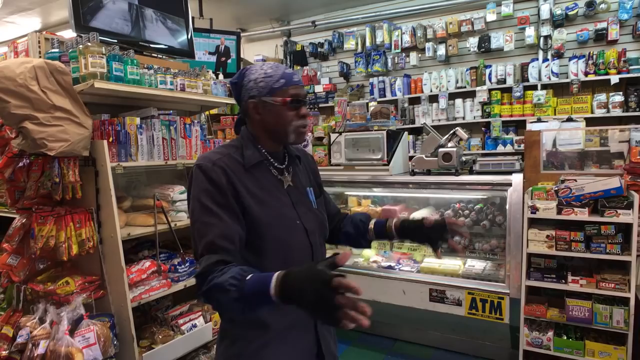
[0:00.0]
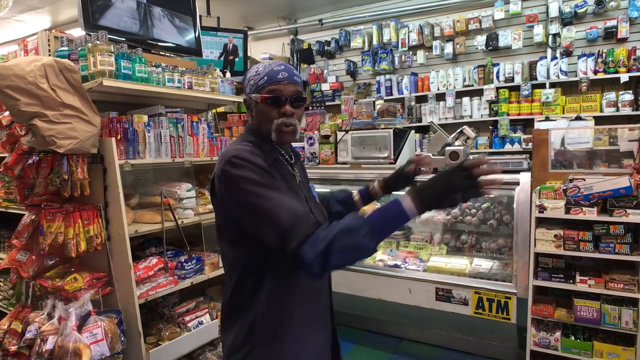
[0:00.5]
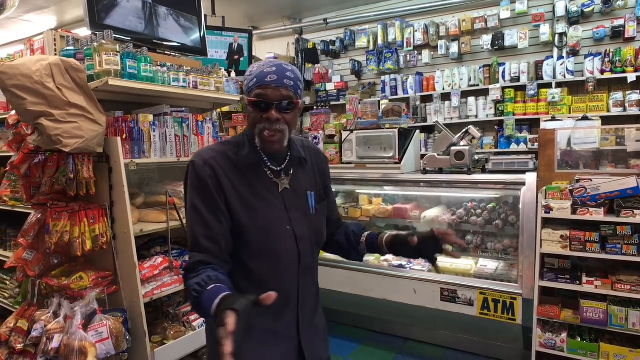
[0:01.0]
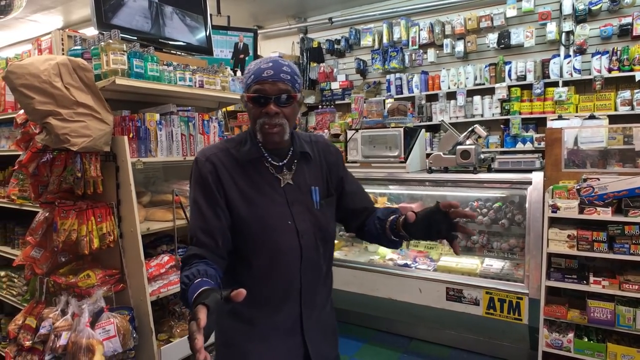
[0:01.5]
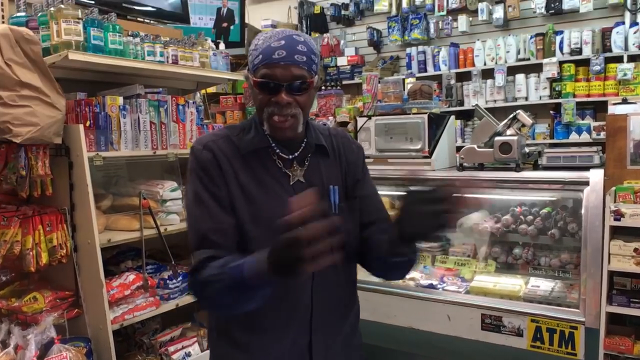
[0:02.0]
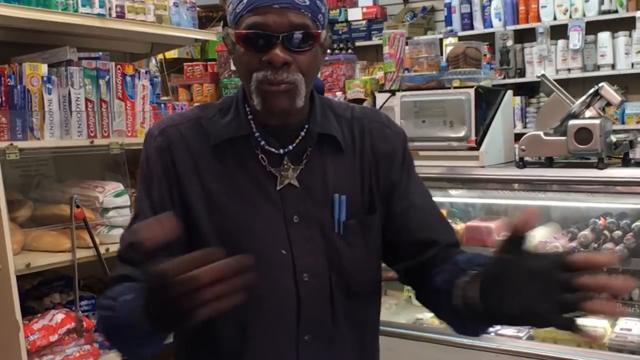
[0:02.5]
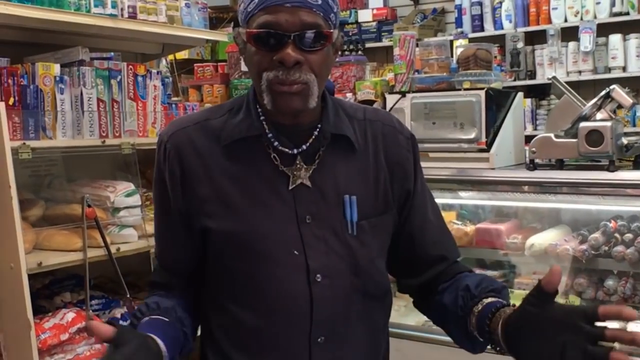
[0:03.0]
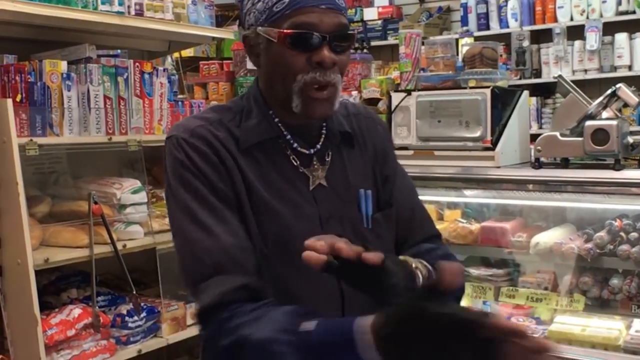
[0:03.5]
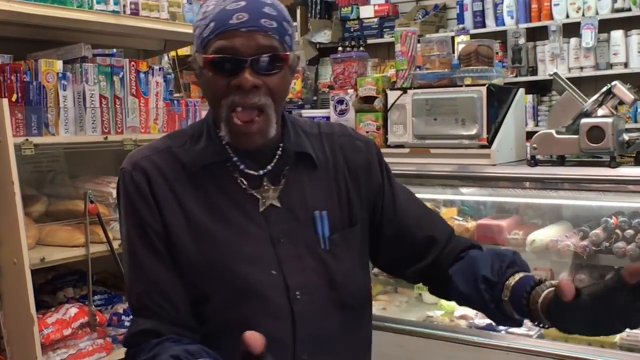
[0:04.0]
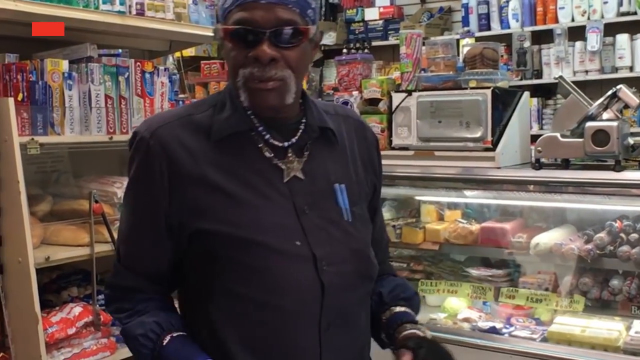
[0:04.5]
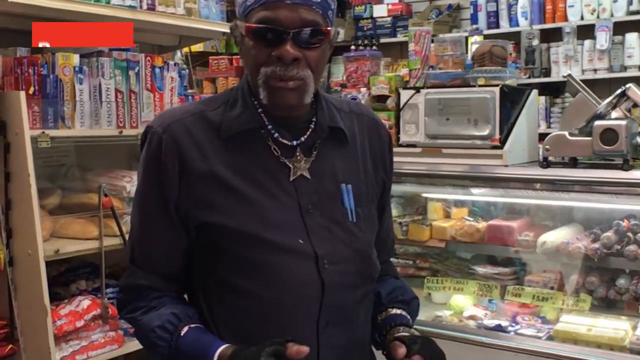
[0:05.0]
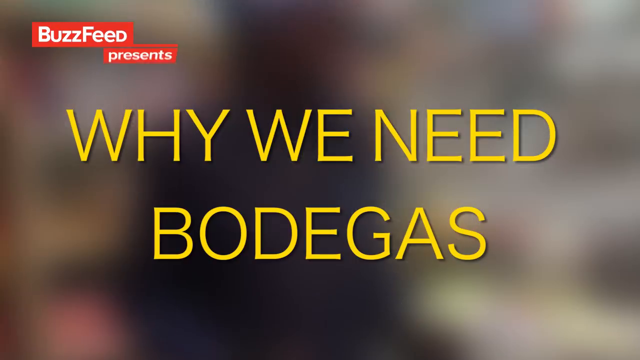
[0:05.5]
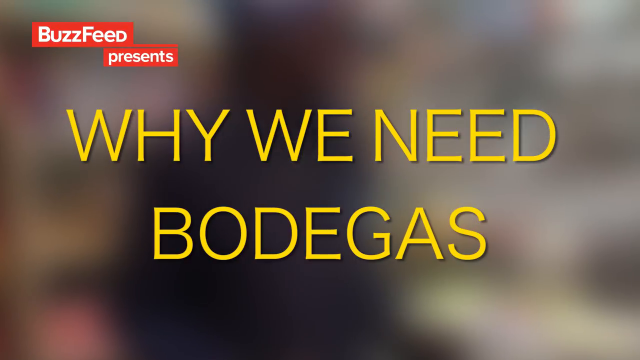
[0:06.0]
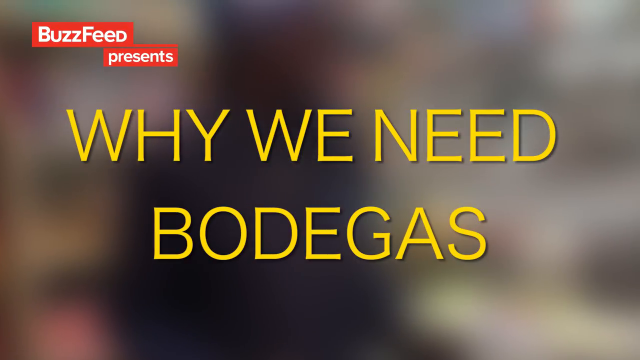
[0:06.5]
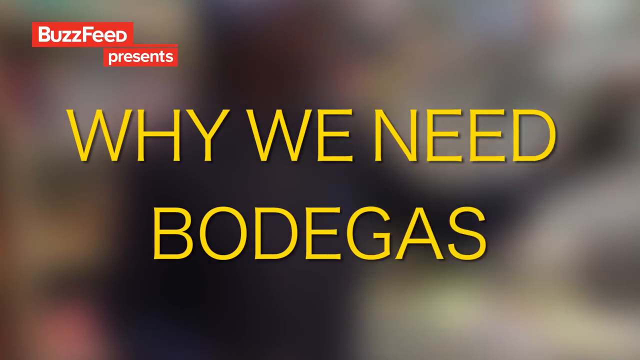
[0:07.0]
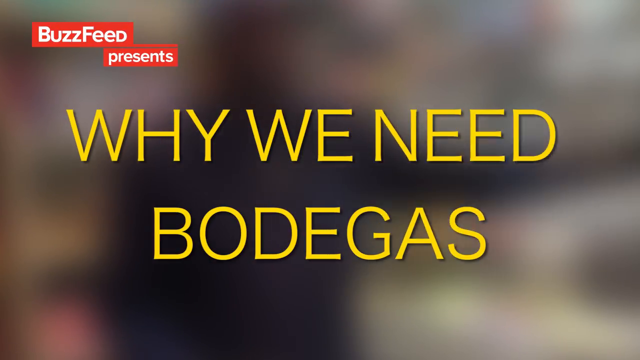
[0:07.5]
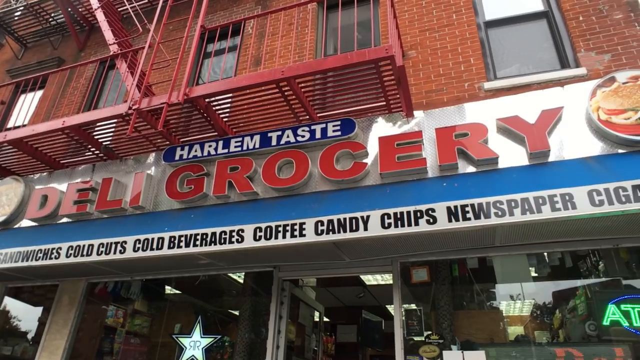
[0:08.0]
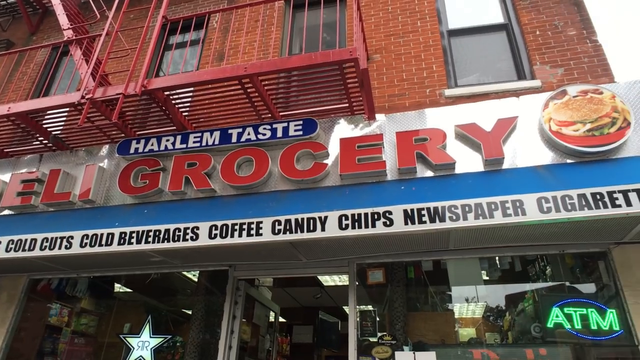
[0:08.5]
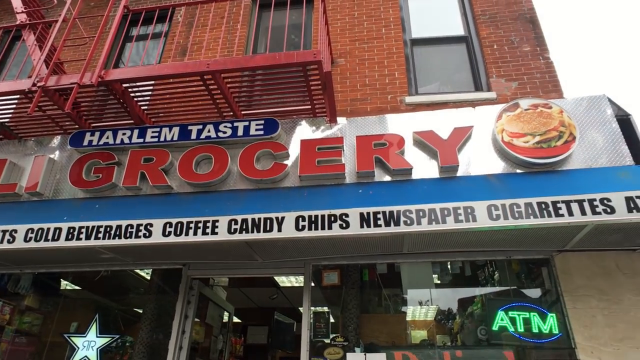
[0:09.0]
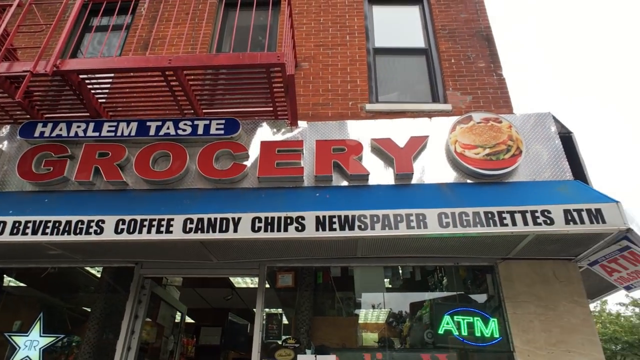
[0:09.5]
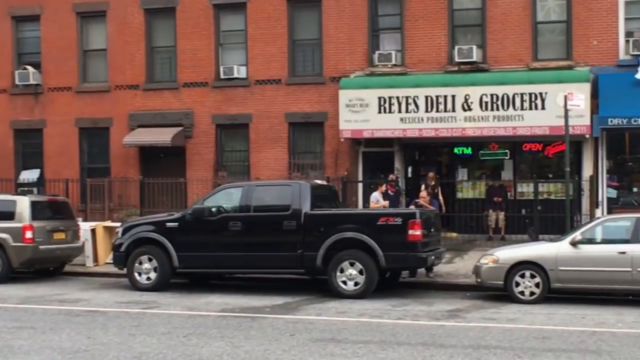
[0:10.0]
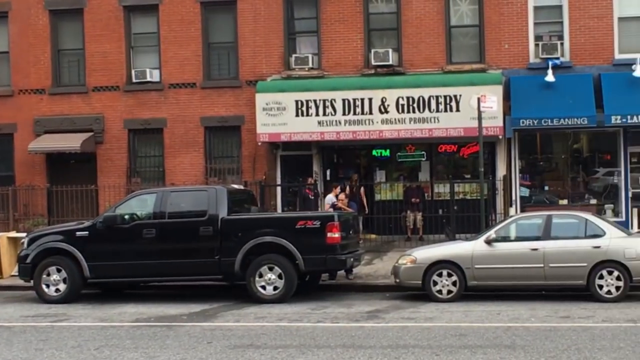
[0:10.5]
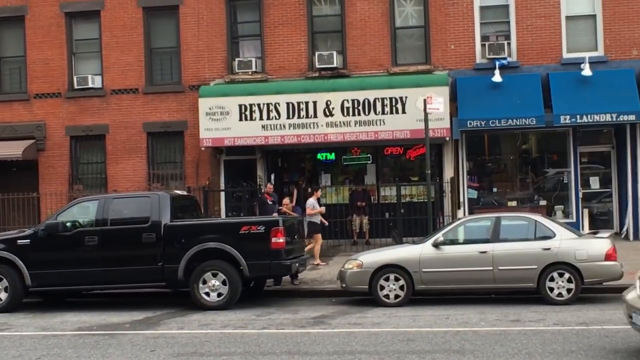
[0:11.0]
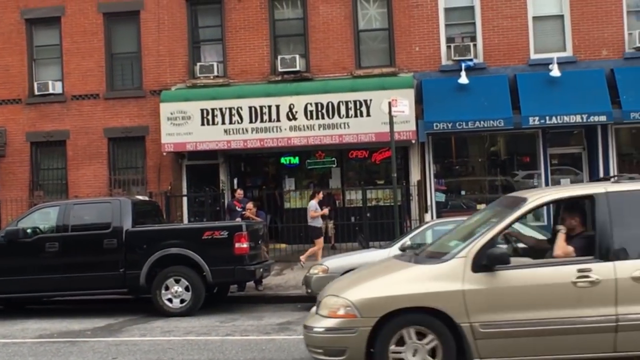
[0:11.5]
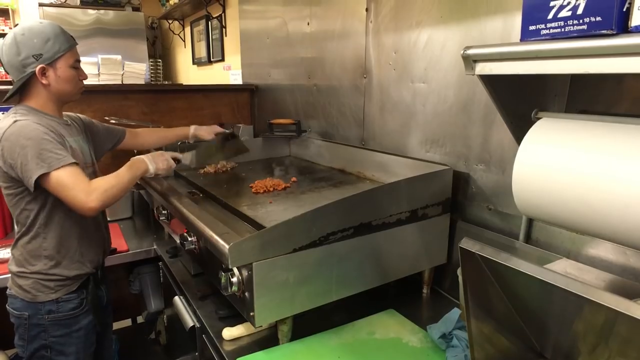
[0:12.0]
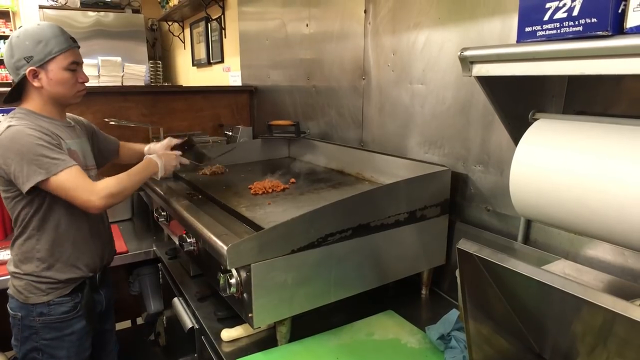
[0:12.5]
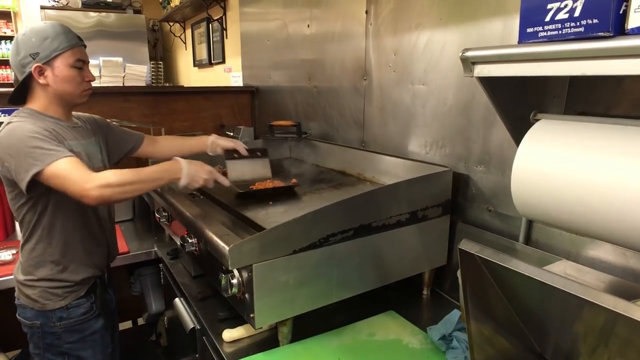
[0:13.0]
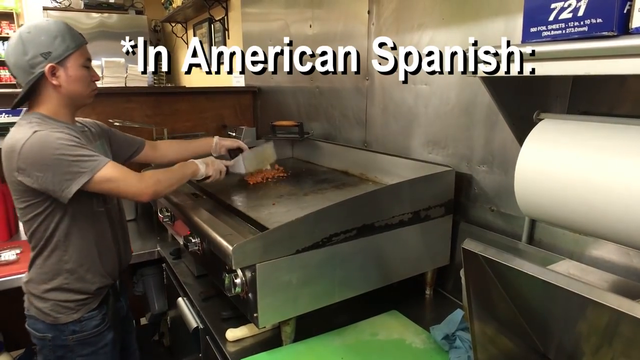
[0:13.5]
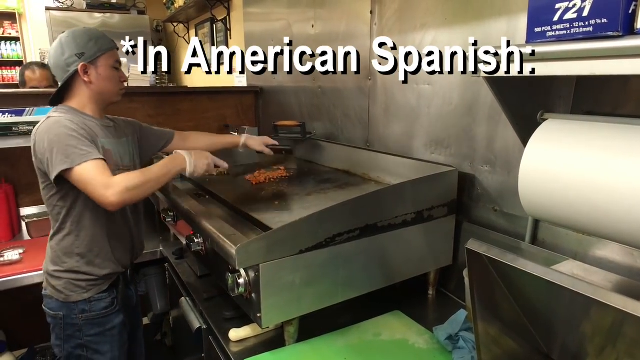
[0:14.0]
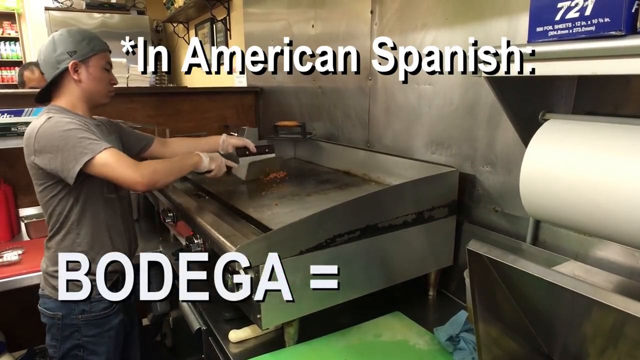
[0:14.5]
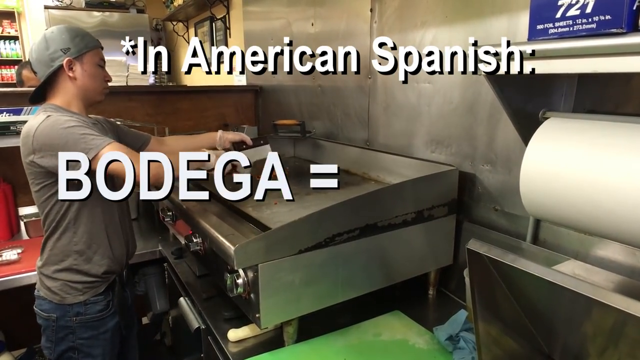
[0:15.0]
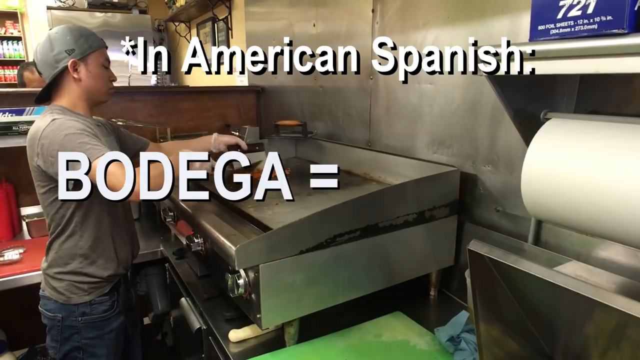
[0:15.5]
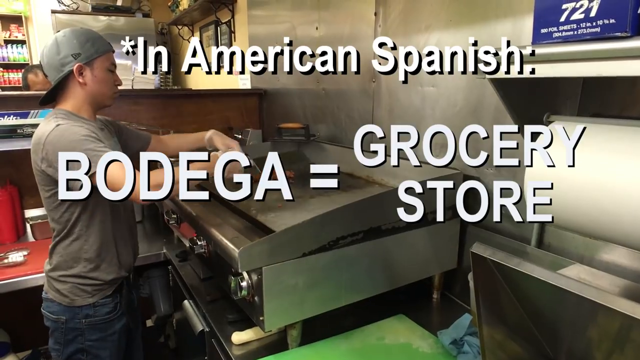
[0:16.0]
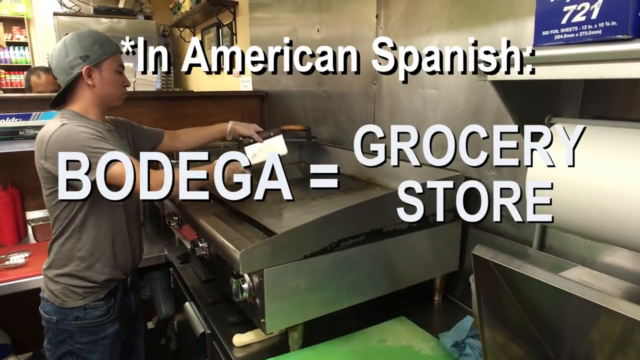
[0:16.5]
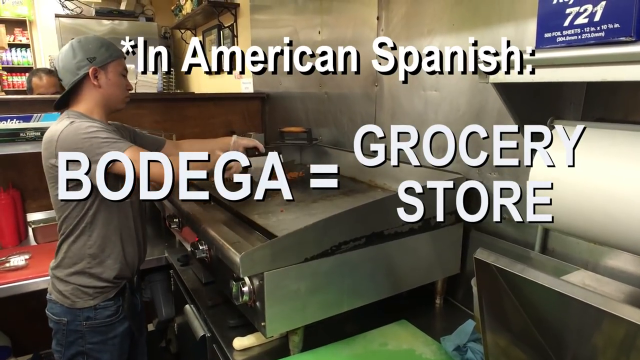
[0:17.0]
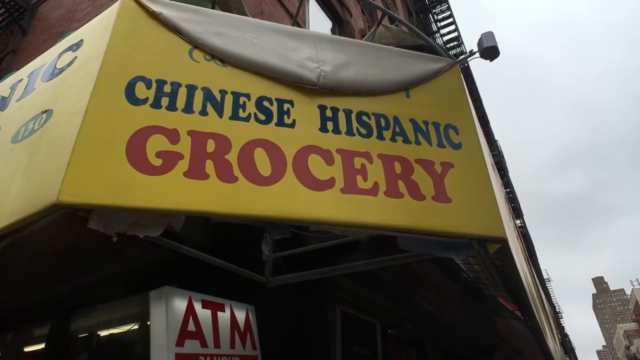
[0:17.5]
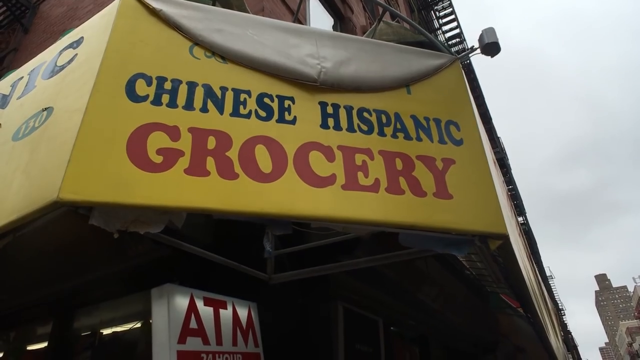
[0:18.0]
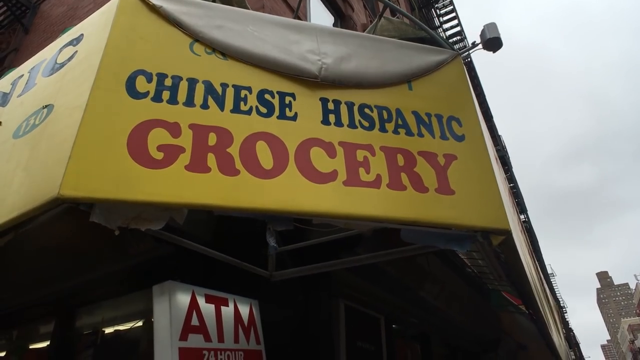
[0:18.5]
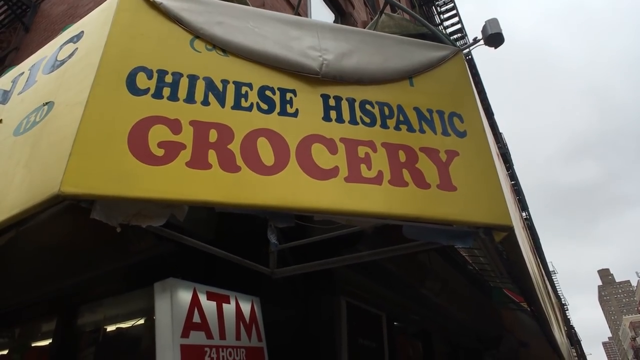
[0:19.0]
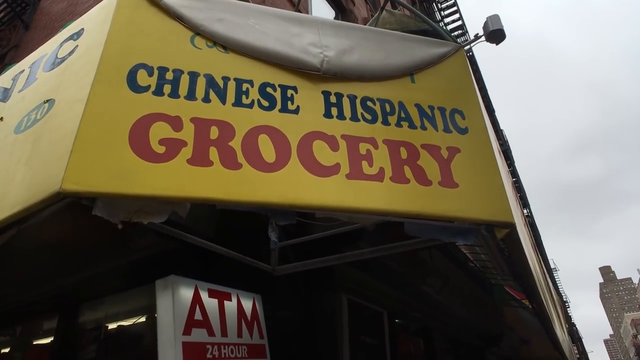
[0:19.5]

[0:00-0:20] An old man wearing shaded spectacles is in a shop full of different items, including Colgate, a machine, and bath products. "BuzzFeed presents" appears in the upper left in white font on a red background. Over a blurry screen, yellow capital-letter text beginning "Why we need" appears. The scene changes to a store, Race Daily and Grocery, with two cars in front of it: a black buggy and a silver-gray private car. People are moving, including one person walking. The scene shifts to a person frying something, wearing gloves, a gray hat and a gray t-shirt. Text at the bottom reads "in American Spanish" and then states that bodega equals grocery store. The scene then shifts to the Chinese-Hispanic grocery store.